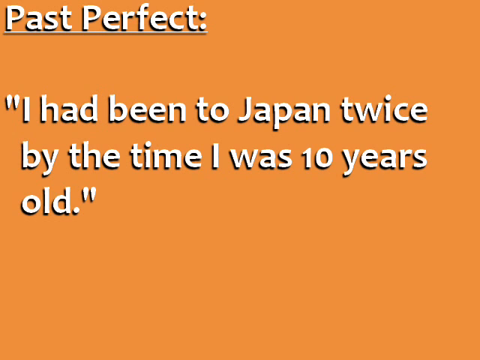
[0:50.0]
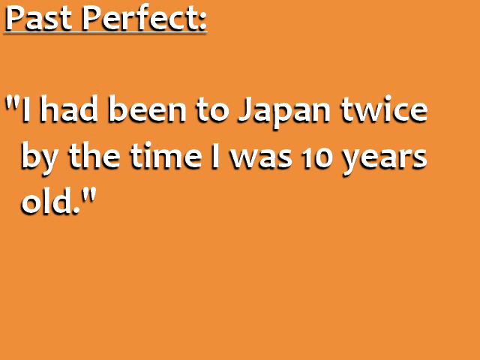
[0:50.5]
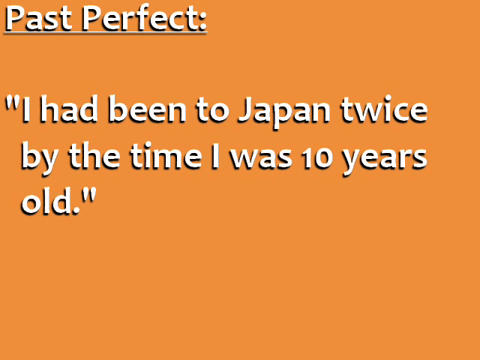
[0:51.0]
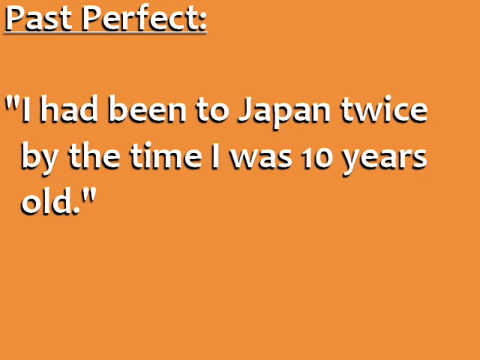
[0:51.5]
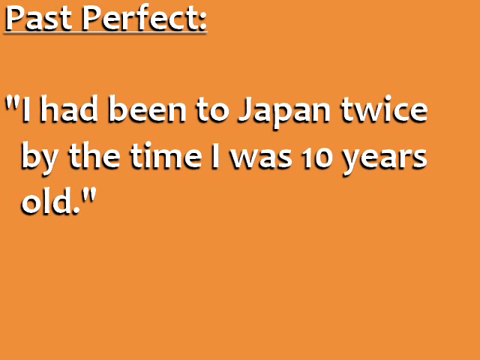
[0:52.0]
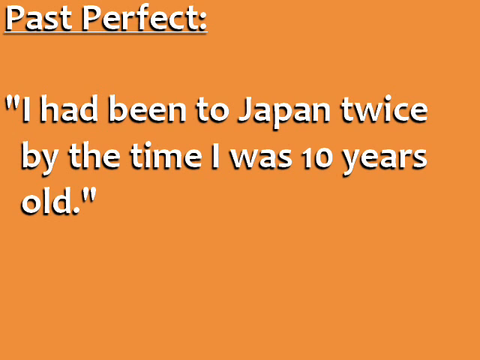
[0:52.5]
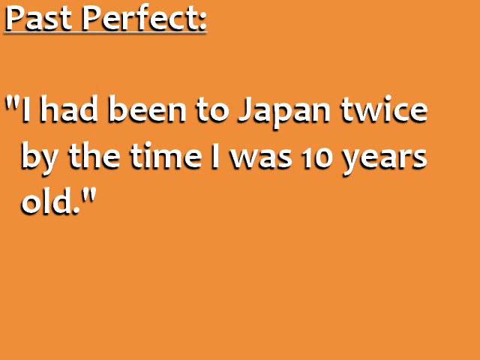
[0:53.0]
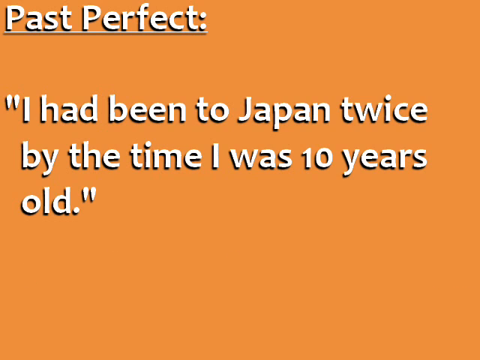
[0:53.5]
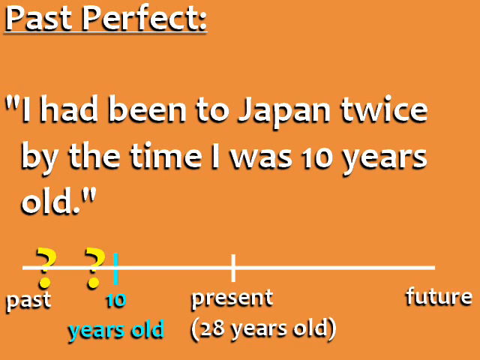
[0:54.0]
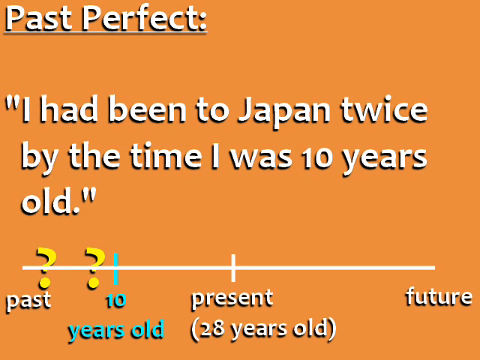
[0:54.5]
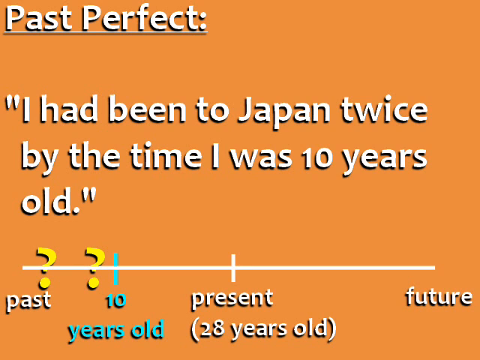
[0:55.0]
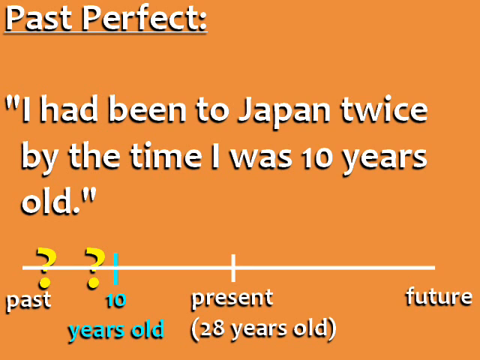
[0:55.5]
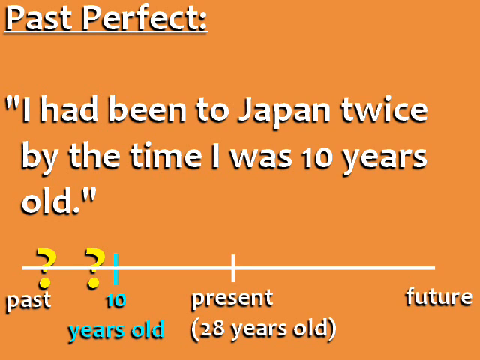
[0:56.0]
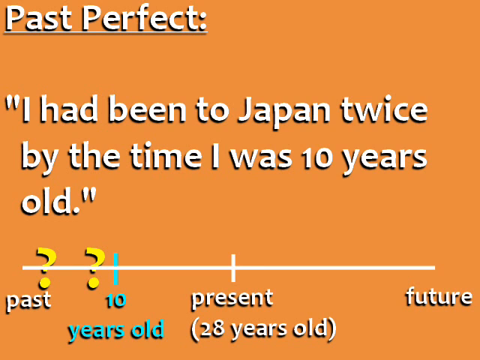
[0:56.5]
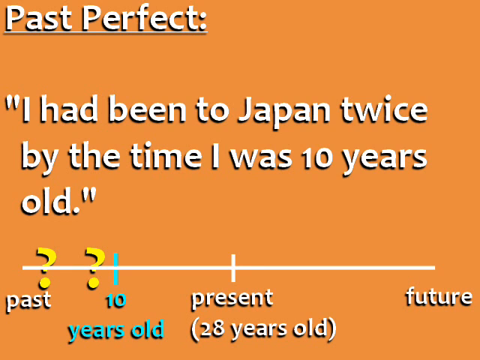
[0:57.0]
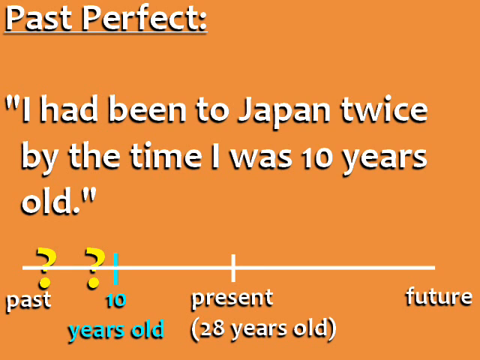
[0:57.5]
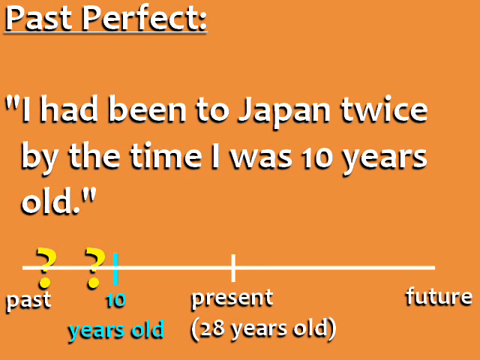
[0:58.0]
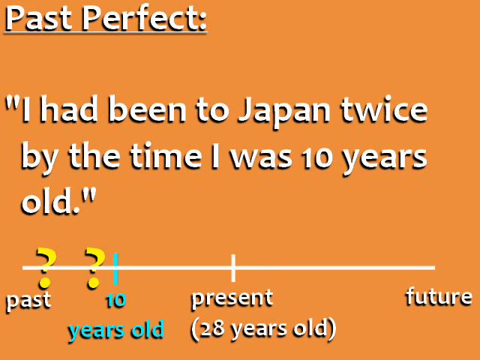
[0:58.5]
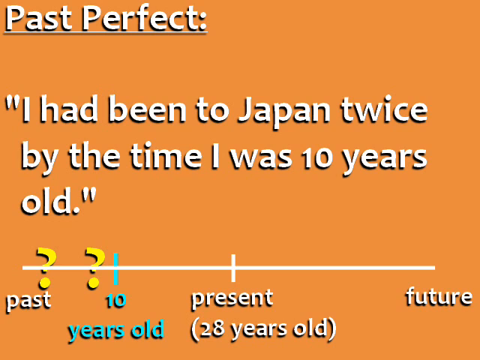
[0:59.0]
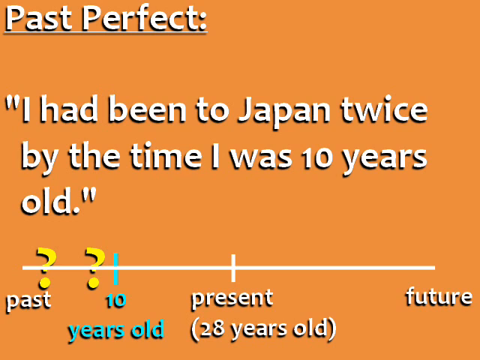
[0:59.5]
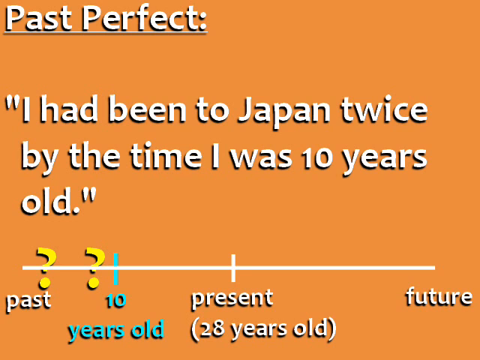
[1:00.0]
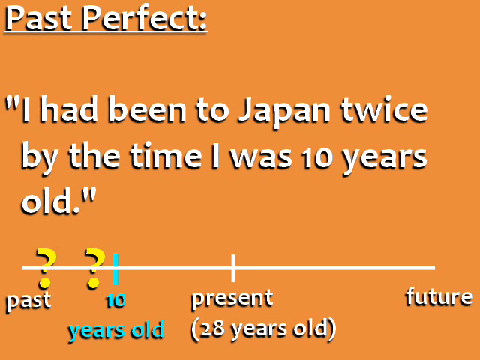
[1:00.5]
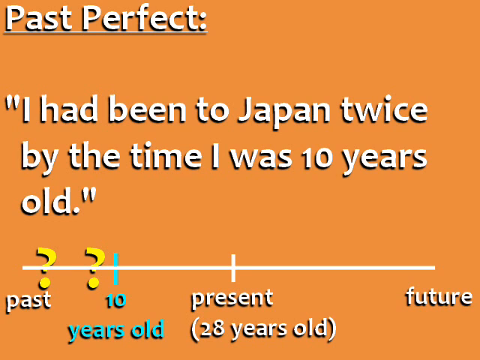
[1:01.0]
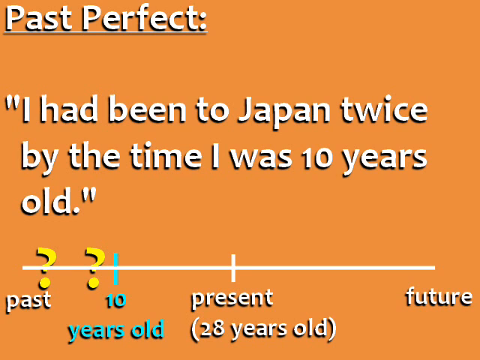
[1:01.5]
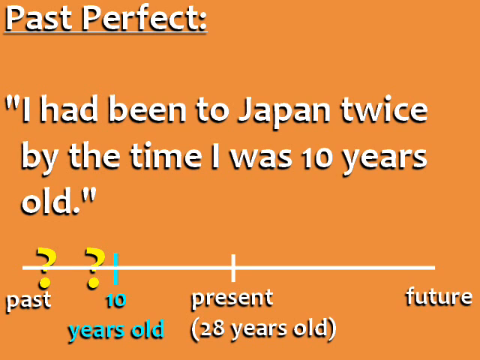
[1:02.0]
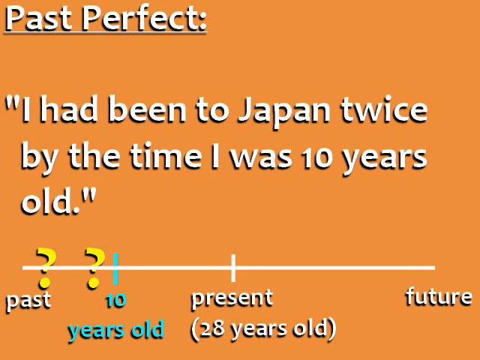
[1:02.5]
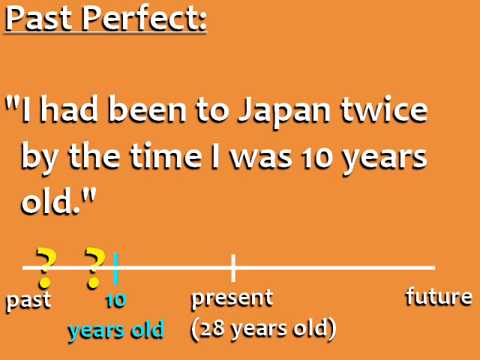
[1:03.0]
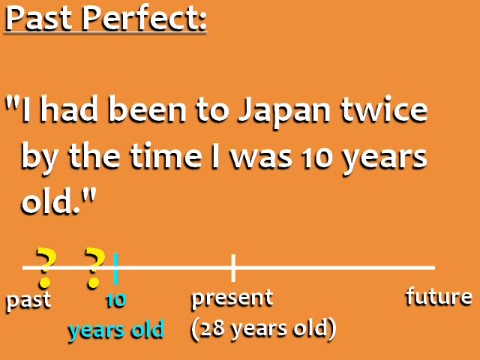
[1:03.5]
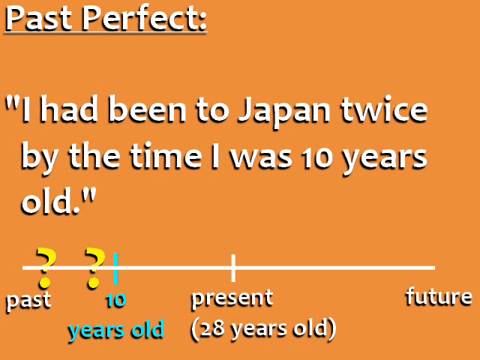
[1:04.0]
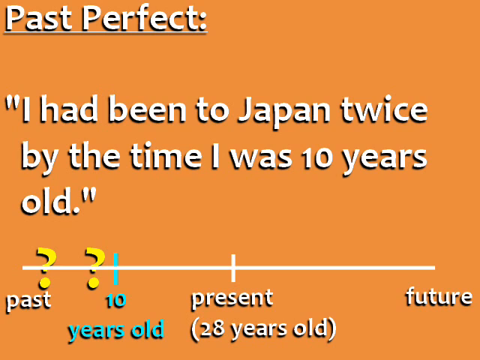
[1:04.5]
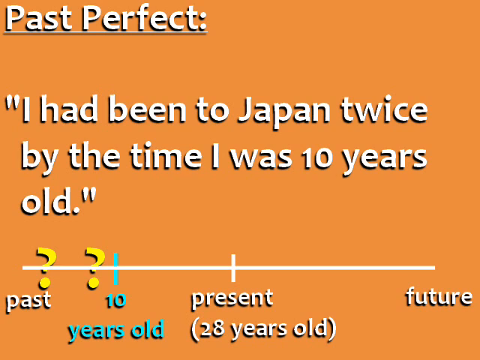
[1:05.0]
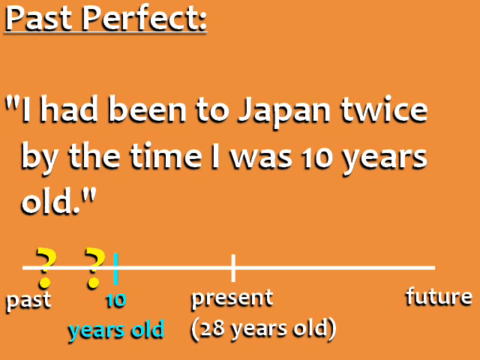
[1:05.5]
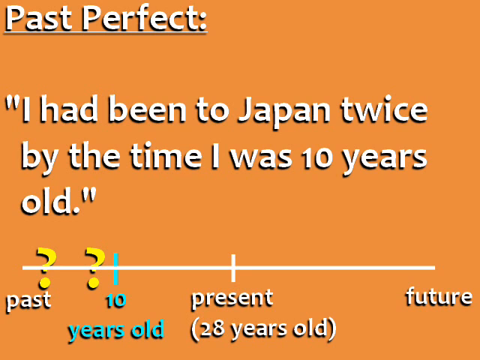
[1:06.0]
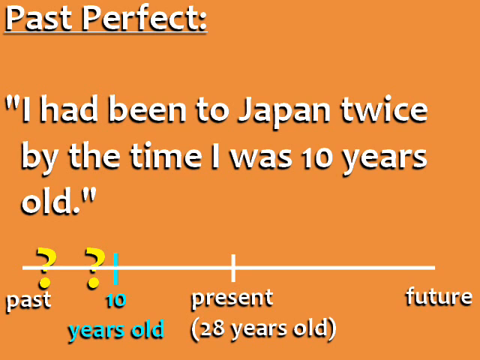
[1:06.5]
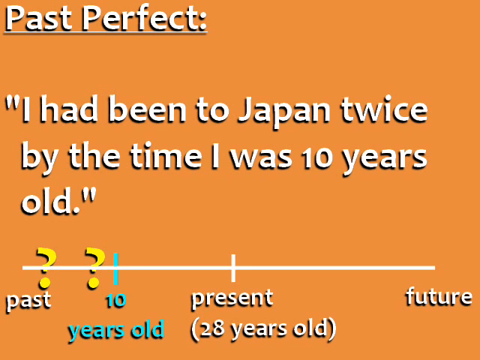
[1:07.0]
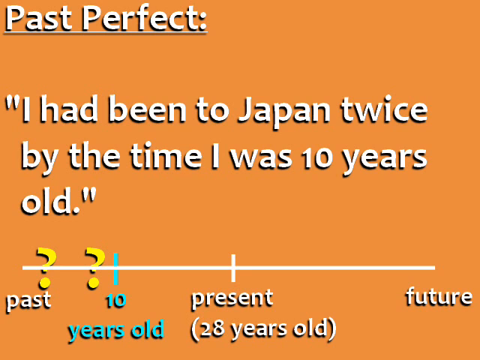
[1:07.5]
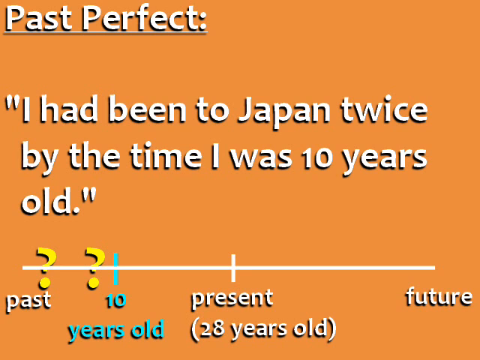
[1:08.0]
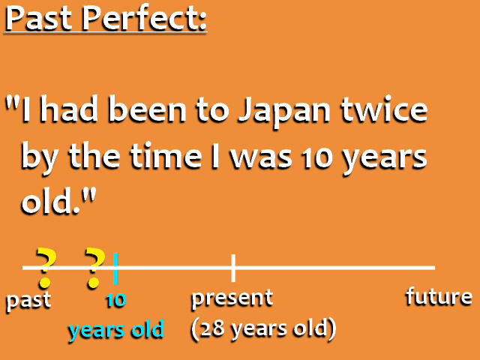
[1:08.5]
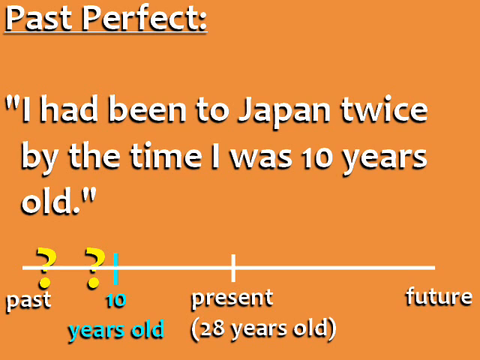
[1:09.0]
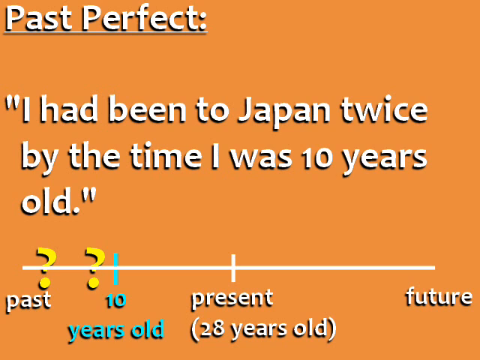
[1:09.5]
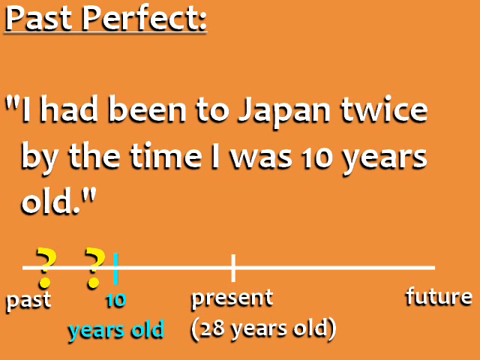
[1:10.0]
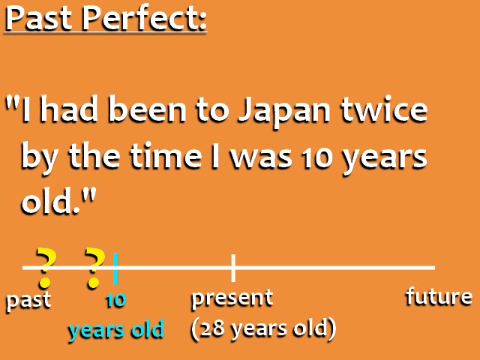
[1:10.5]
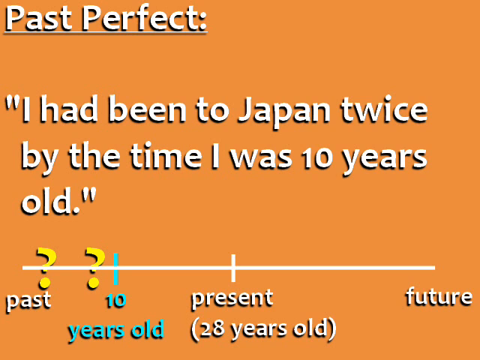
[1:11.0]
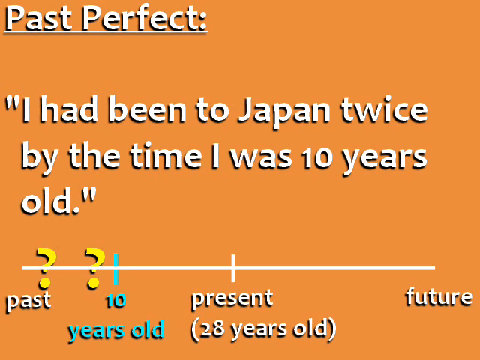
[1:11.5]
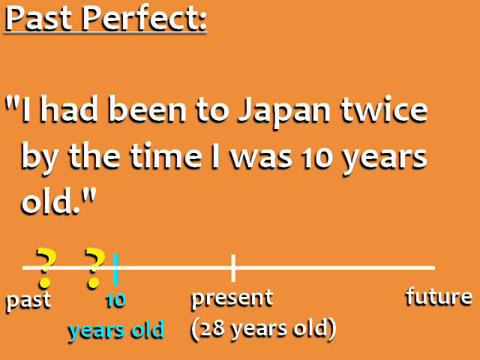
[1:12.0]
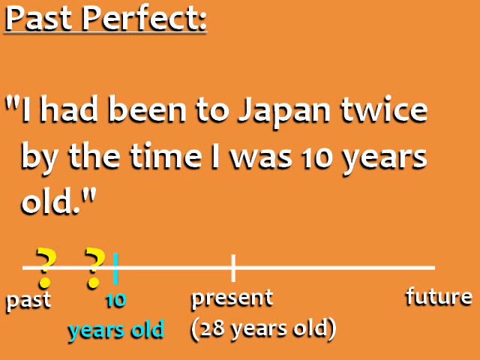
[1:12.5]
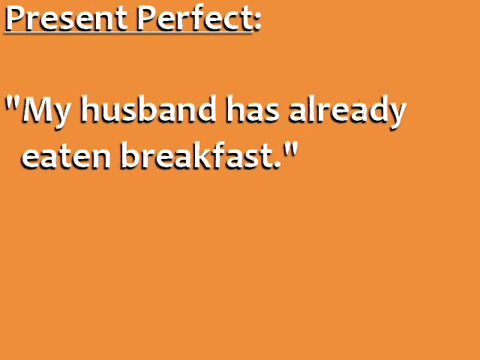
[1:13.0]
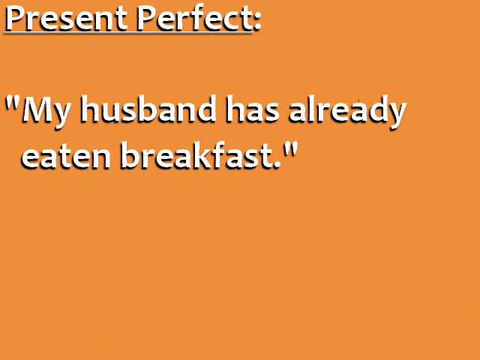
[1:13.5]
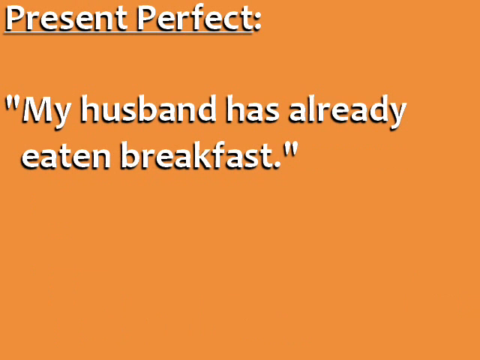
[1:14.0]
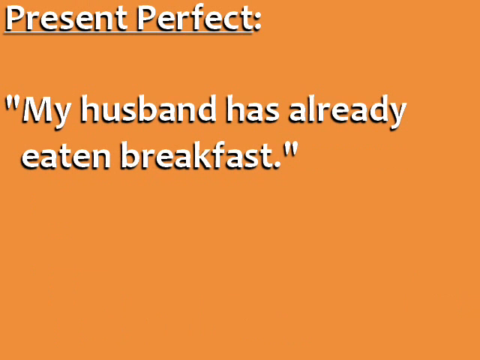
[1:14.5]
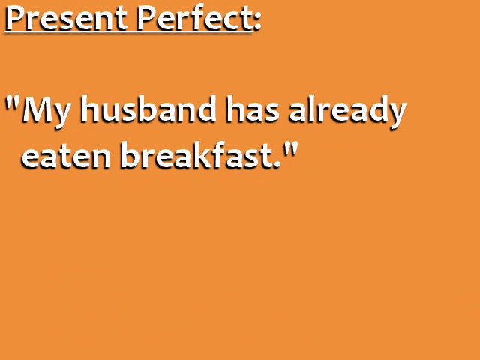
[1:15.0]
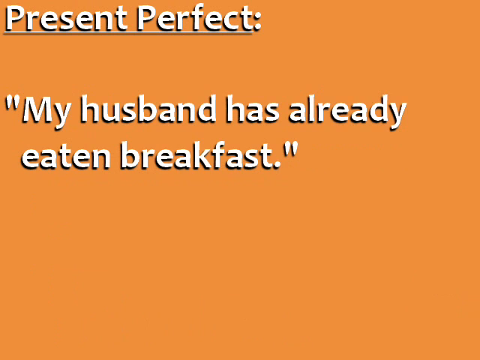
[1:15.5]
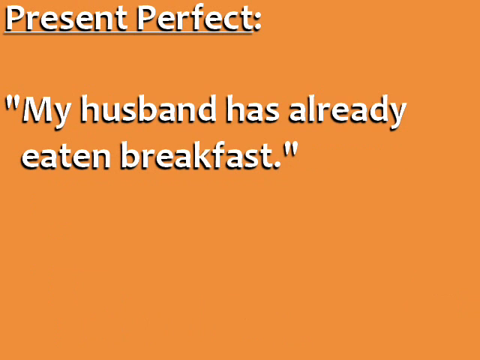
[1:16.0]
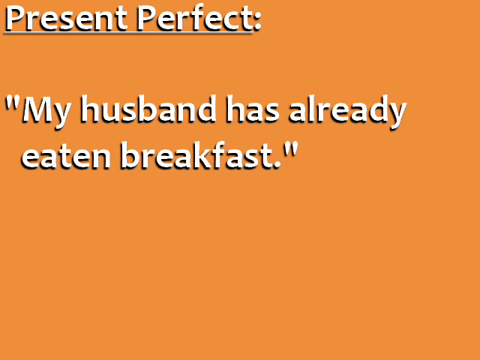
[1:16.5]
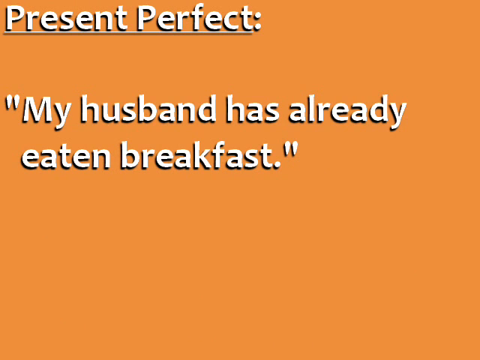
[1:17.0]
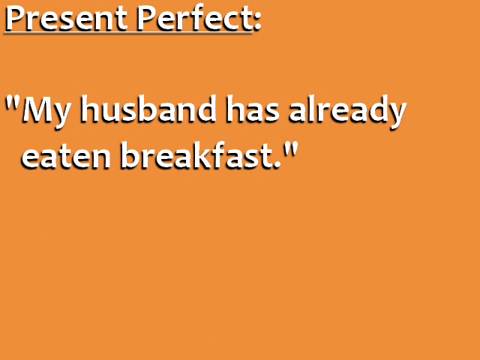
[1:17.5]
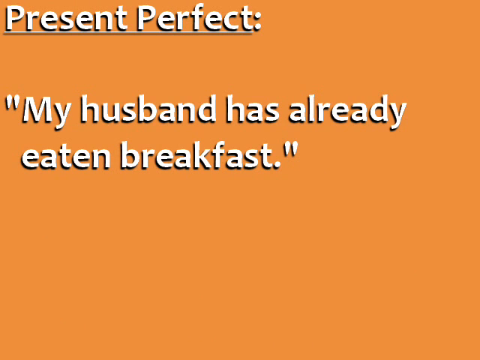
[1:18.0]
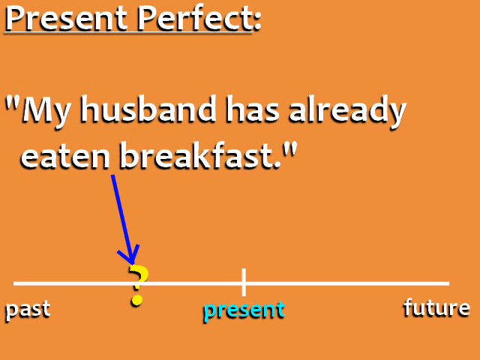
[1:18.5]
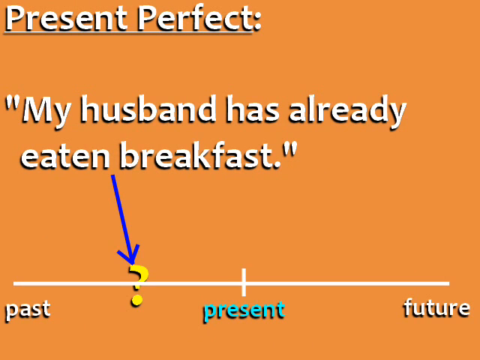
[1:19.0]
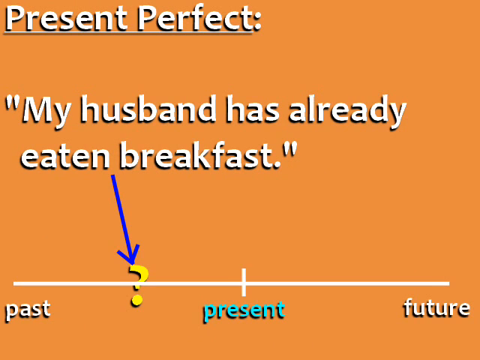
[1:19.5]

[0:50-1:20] The timeline shows past, then "10 years old" in between, then present with "28 years old," then future. Another example appears in quotes: "my husband has already eaten breakfast." There is a question mark with an arrow pointing at it, and a bar showing past, present and future. A bar then reads "I had been in Japan twice by the time of 10 years."